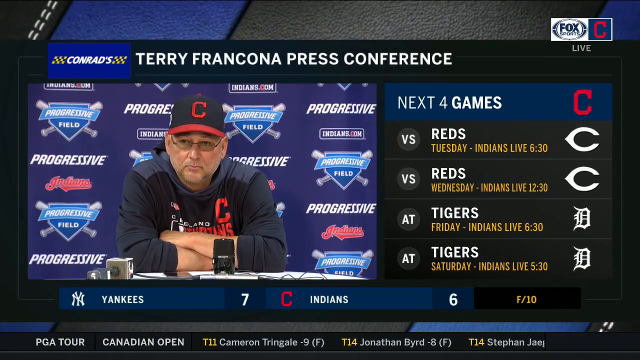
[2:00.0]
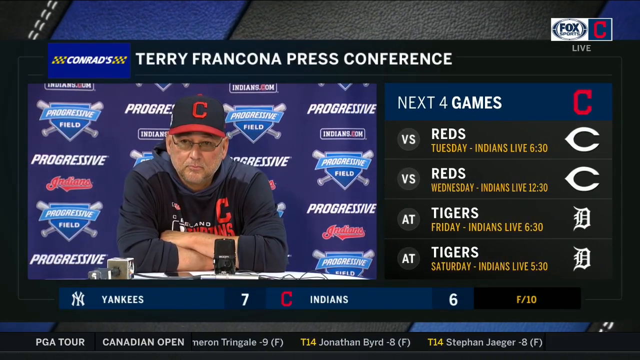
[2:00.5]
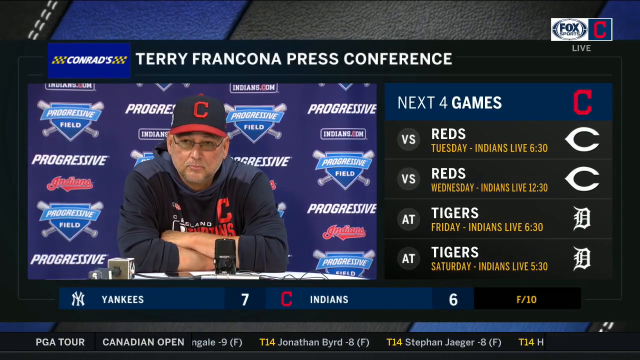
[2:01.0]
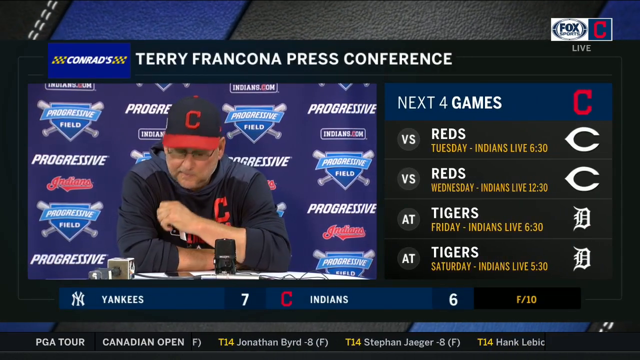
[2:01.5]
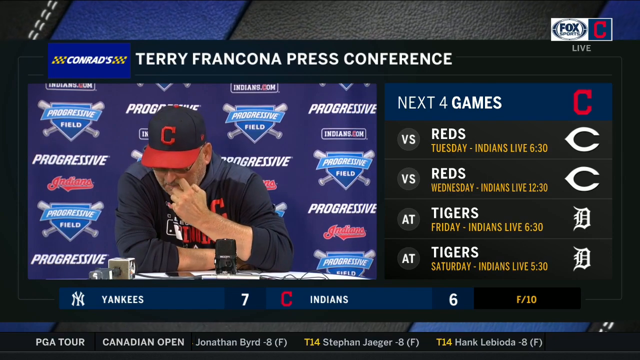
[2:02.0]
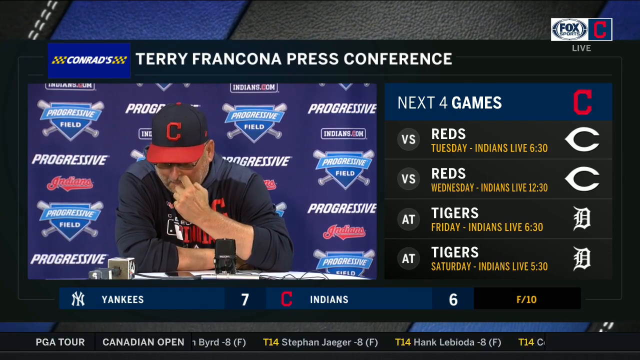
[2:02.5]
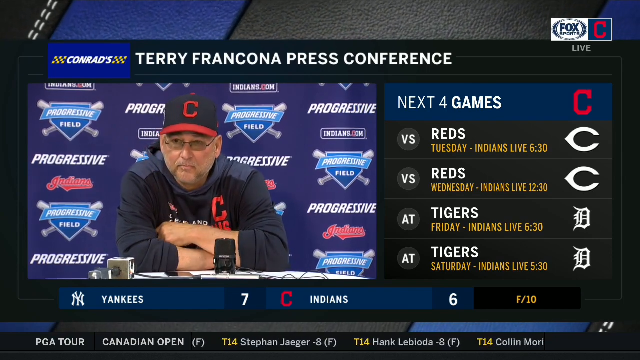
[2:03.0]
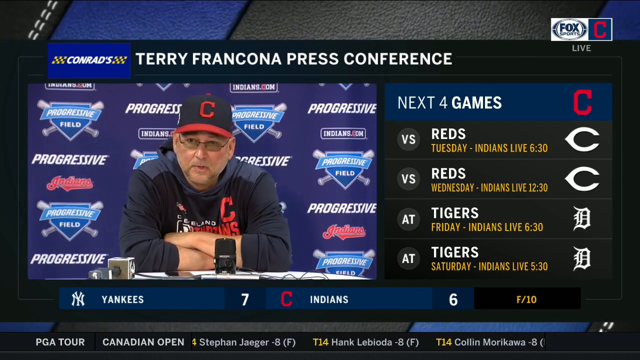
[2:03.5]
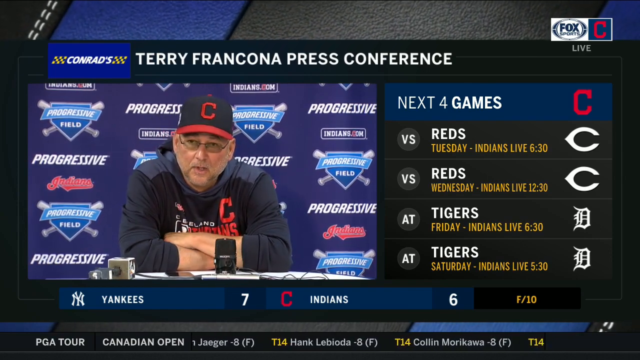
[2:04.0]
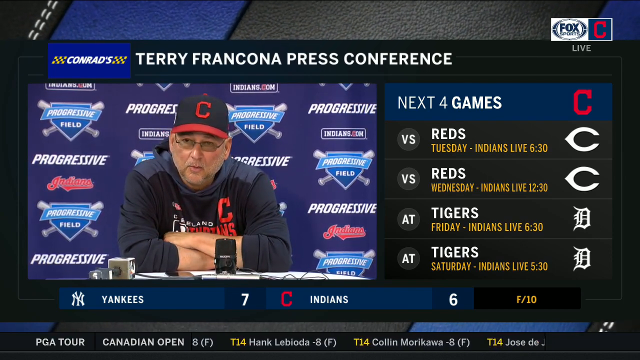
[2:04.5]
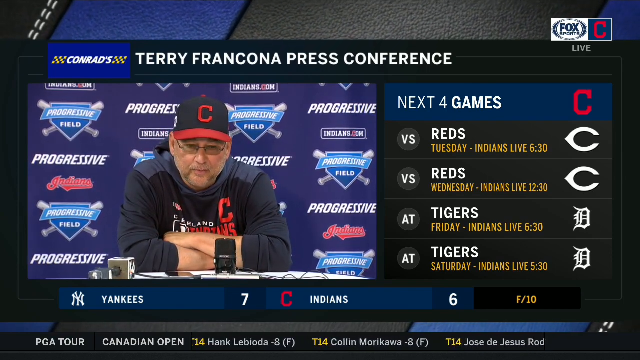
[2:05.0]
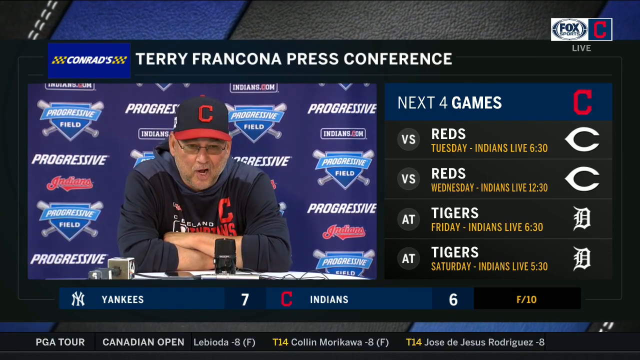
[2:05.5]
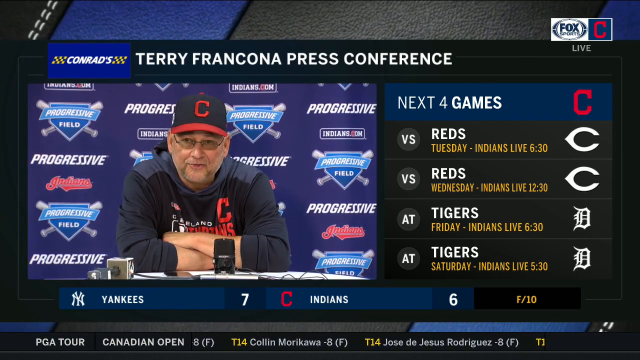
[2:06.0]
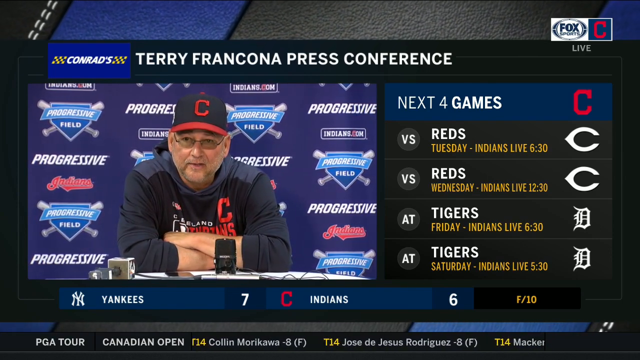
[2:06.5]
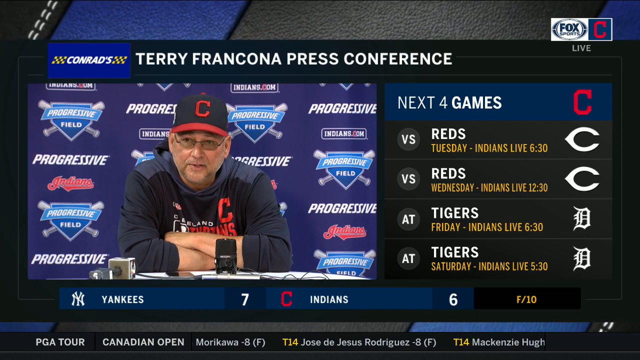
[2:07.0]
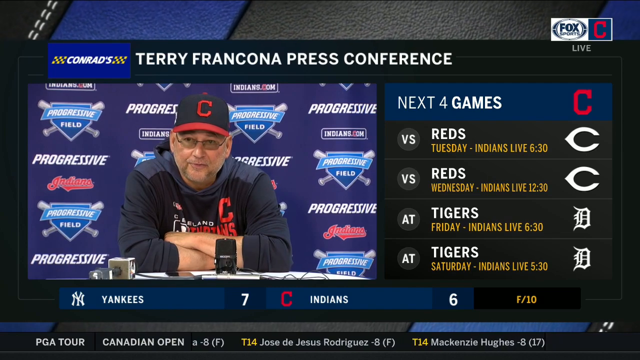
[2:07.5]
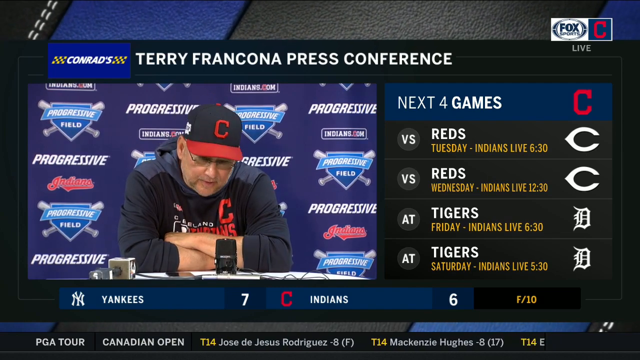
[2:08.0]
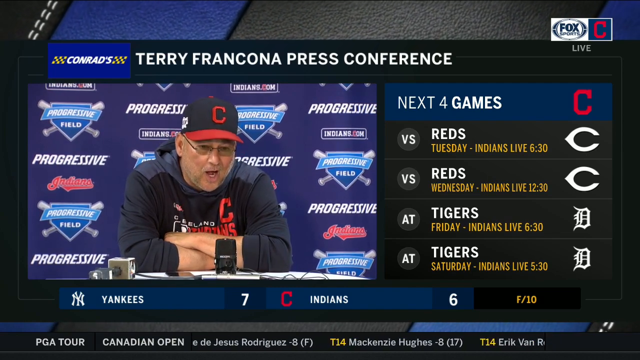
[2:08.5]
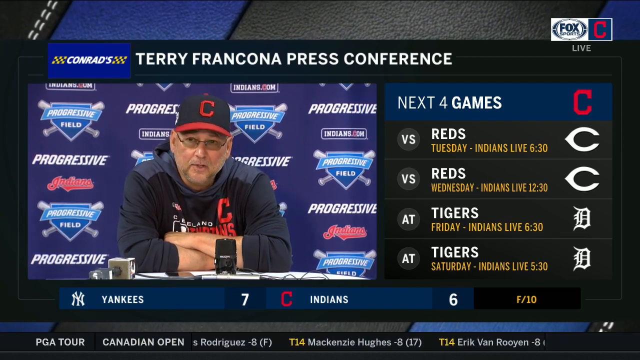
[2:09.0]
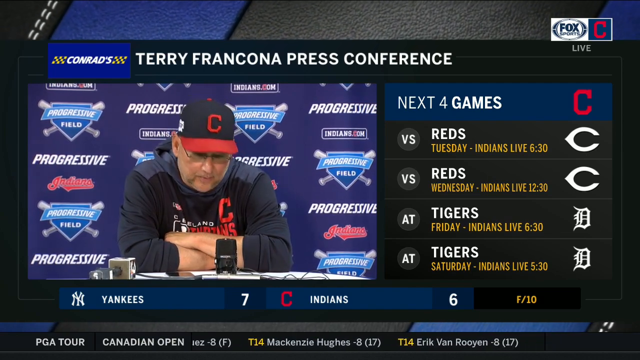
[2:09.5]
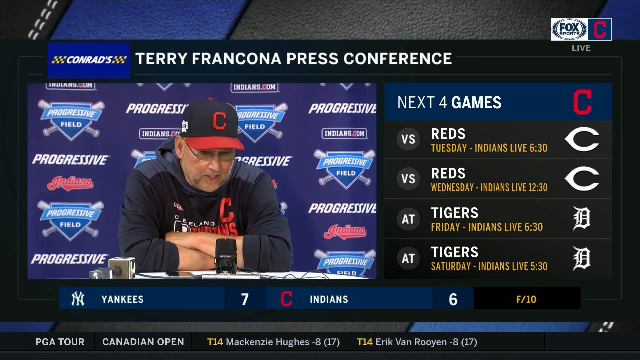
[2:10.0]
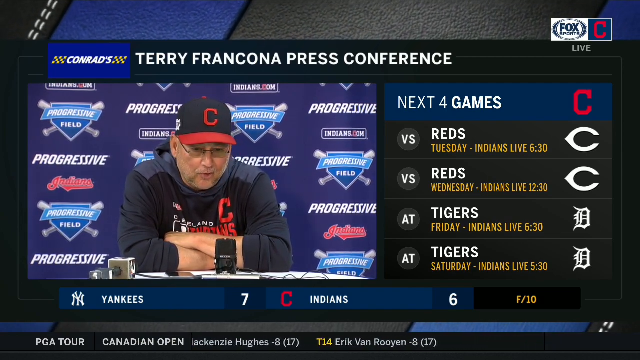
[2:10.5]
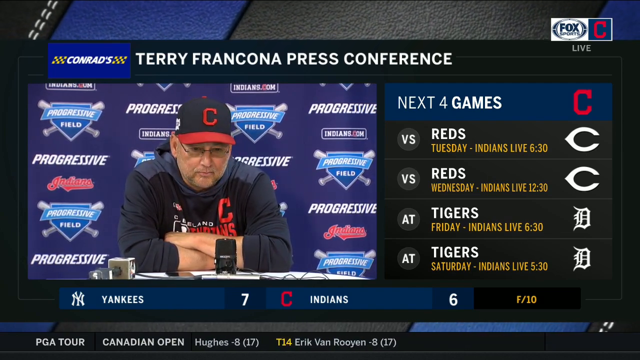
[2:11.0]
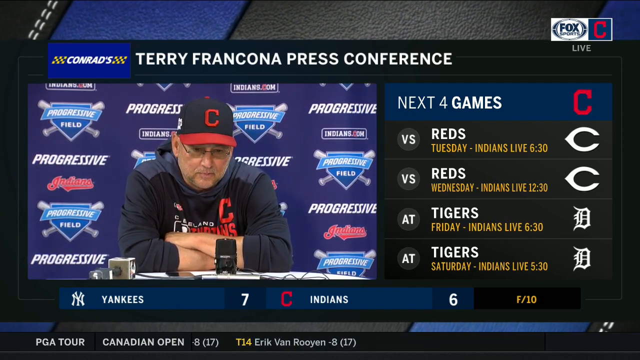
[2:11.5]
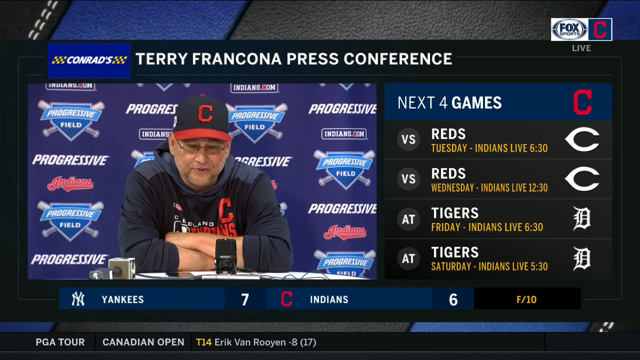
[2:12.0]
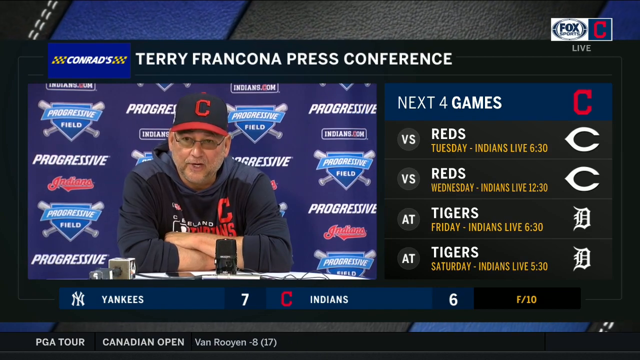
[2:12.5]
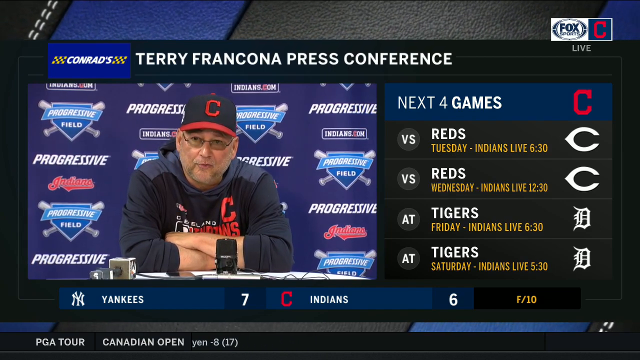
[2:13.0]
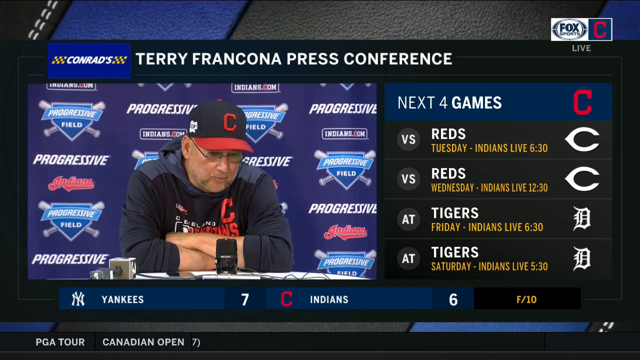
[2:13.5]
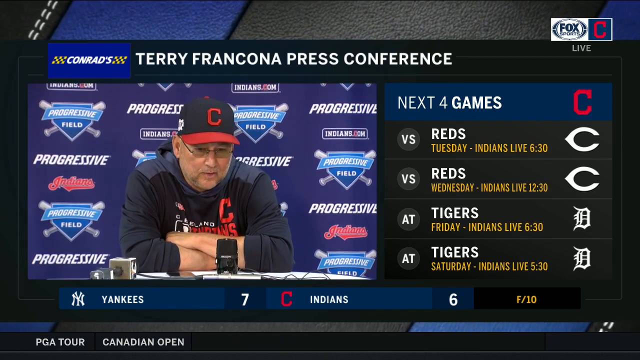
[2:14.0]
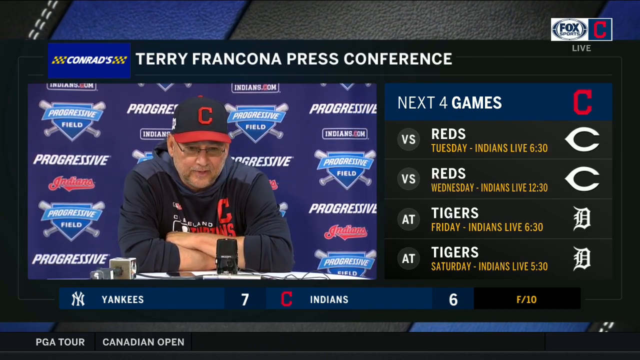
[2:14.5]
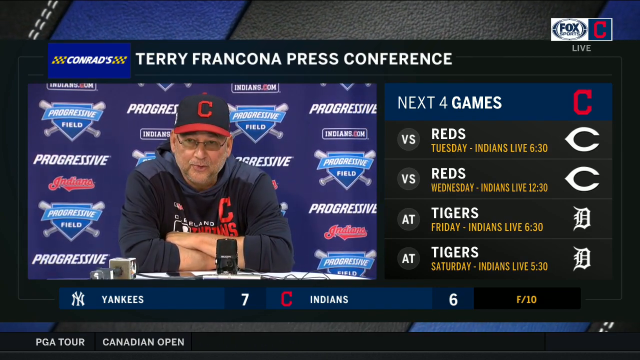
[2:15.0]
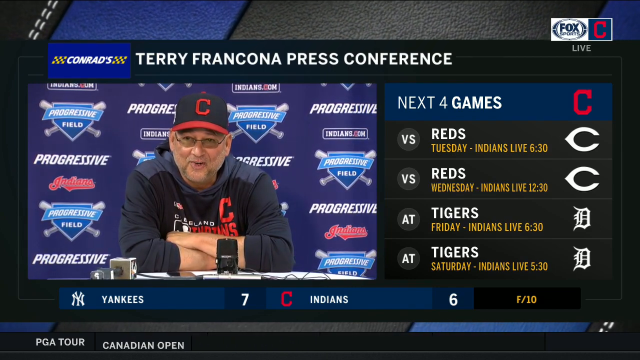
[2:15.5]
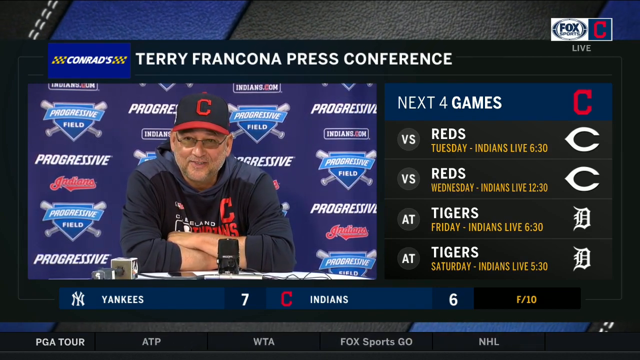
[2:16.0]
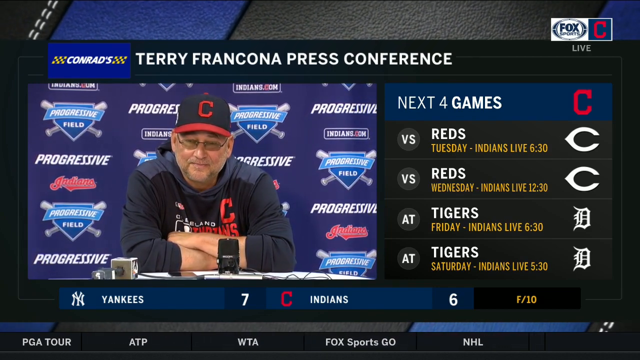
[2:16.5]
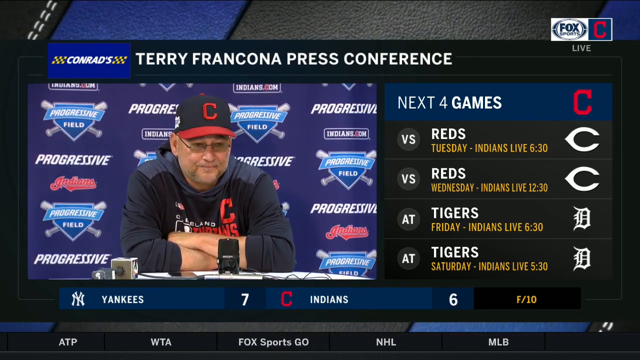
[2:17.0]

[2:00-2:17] Baseball coach Terry Francona holds a press conference, answering questions from a group of people. He talks directly to the audience, wears a pair of glasses and speaks with a lot of passion, looking at the reporters asking him questions. On the right section of the screen, text lists the next four games against the Reds and the Tigers. The top right reads "Fox Sports" with the Cleveland Indians.